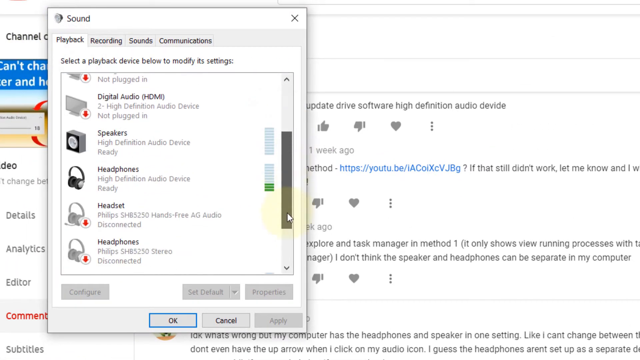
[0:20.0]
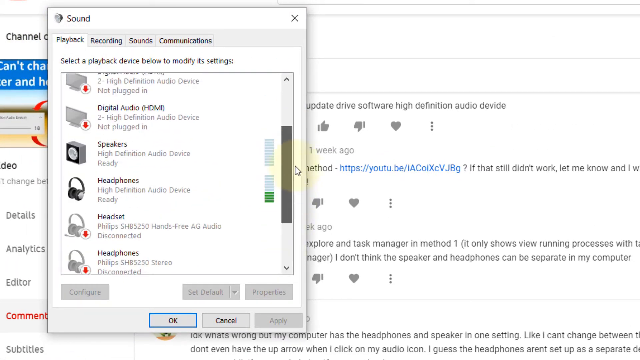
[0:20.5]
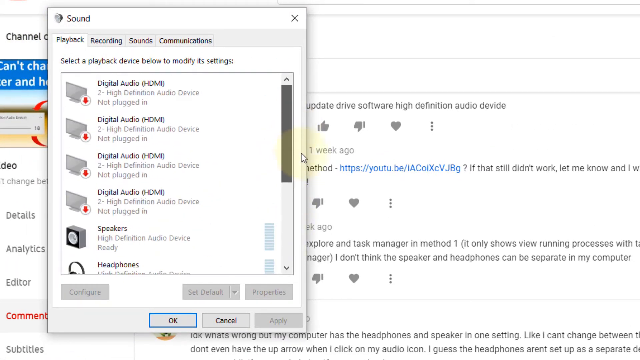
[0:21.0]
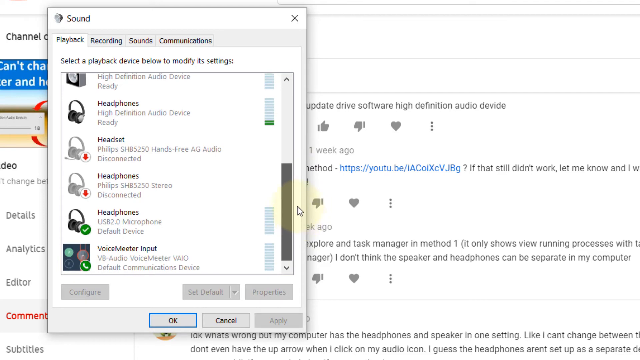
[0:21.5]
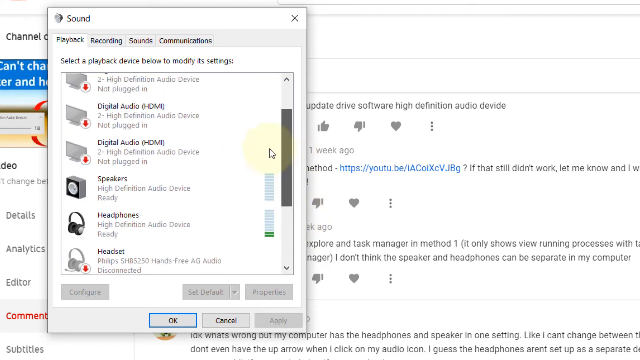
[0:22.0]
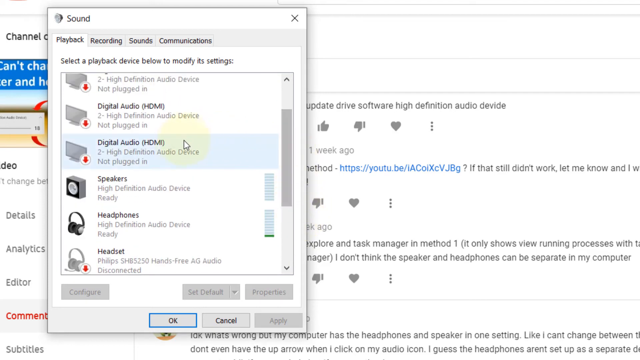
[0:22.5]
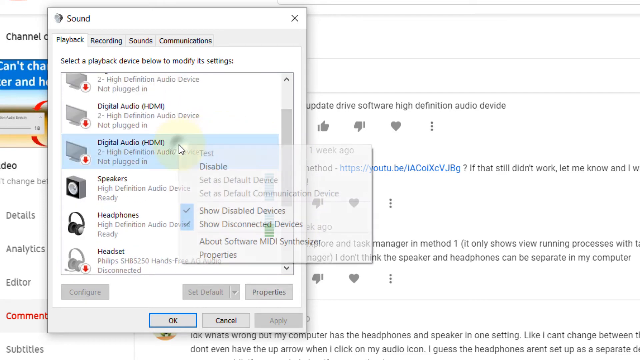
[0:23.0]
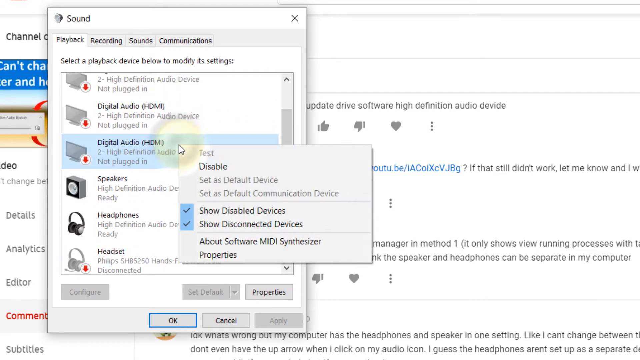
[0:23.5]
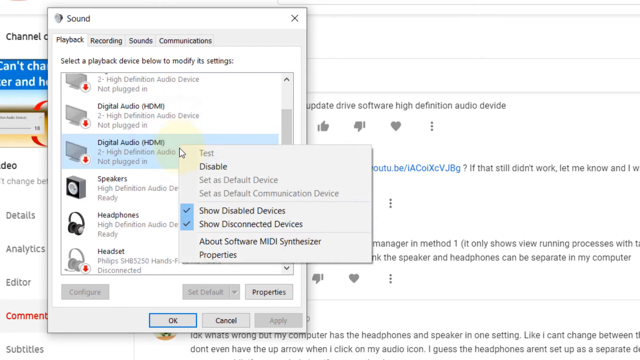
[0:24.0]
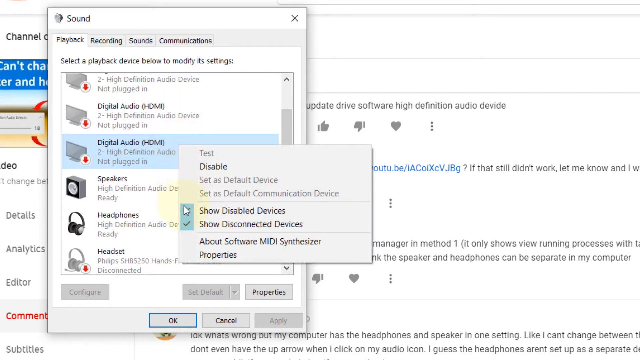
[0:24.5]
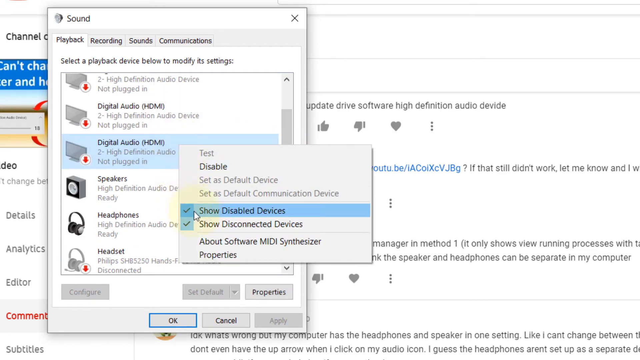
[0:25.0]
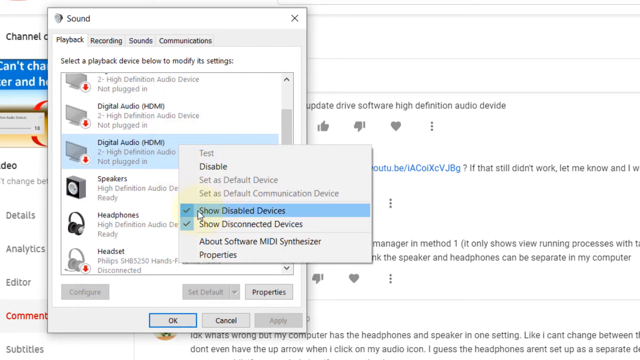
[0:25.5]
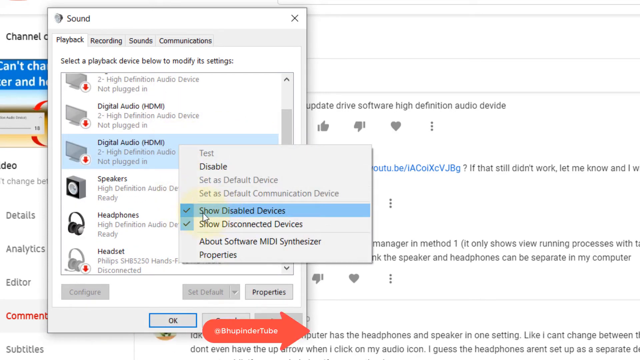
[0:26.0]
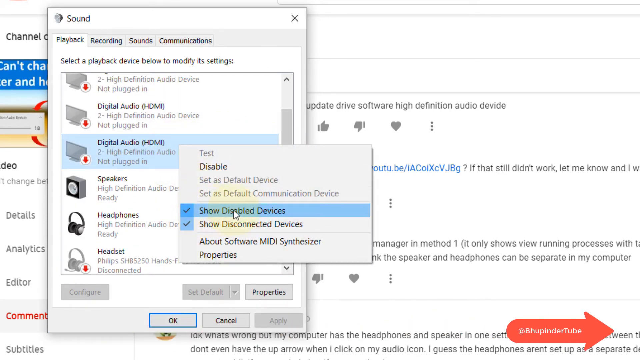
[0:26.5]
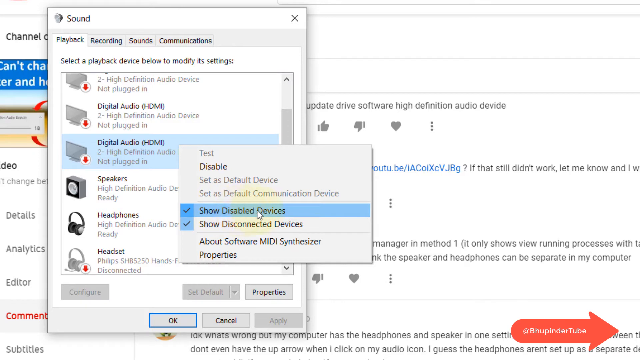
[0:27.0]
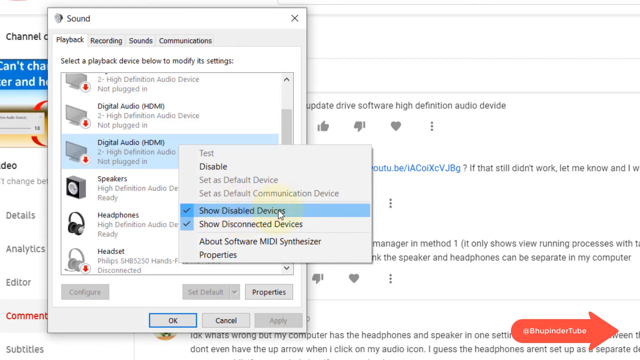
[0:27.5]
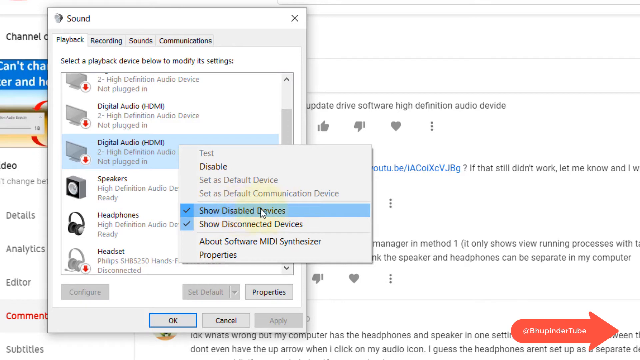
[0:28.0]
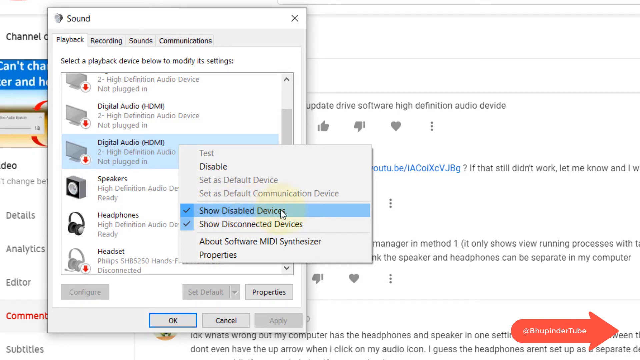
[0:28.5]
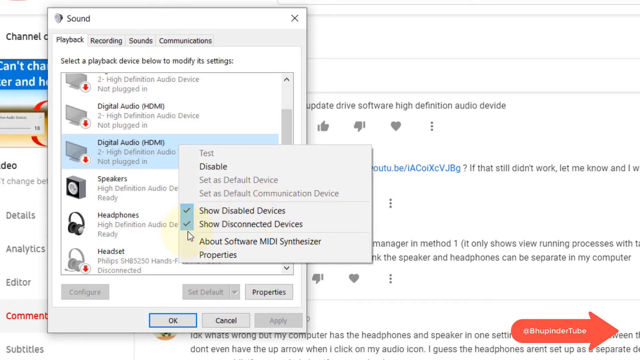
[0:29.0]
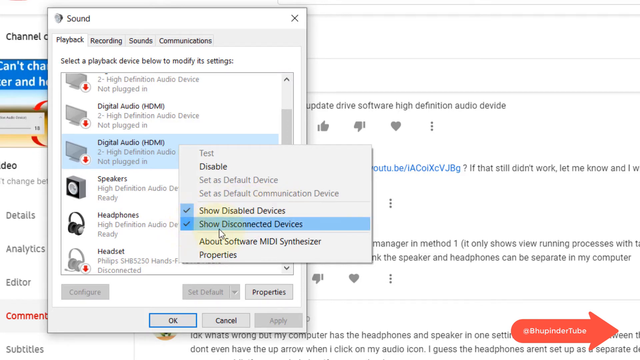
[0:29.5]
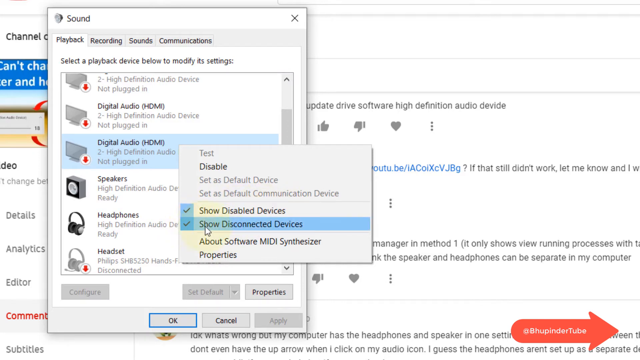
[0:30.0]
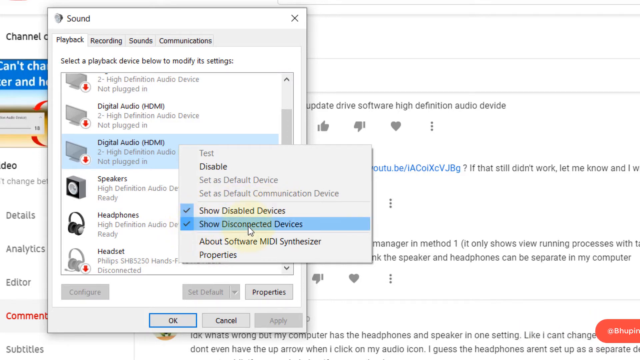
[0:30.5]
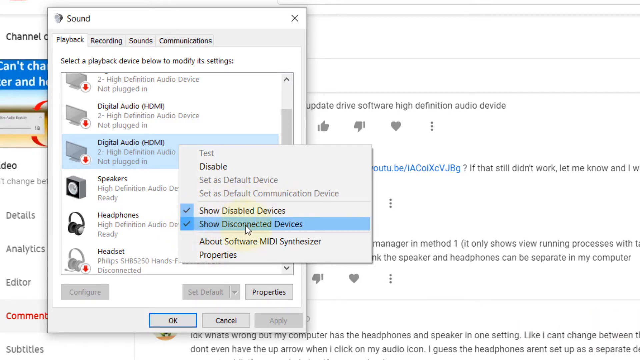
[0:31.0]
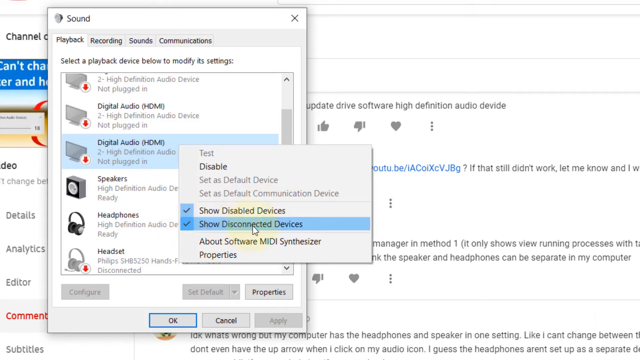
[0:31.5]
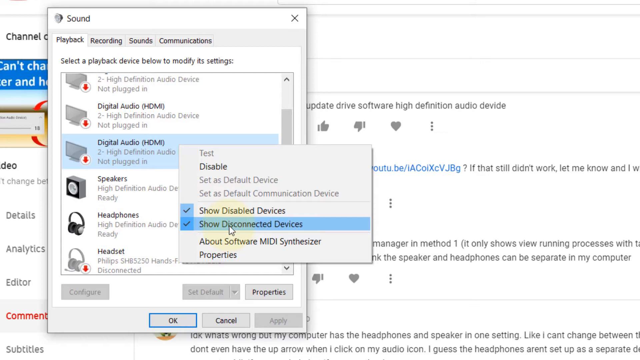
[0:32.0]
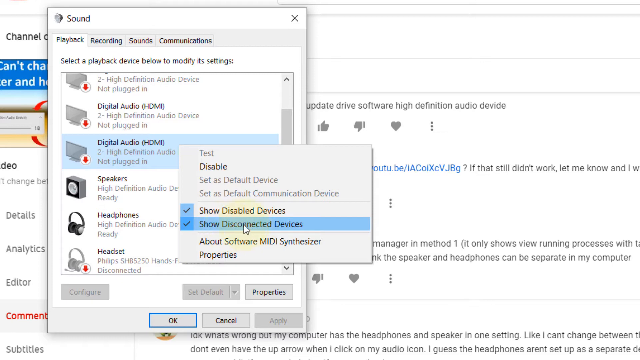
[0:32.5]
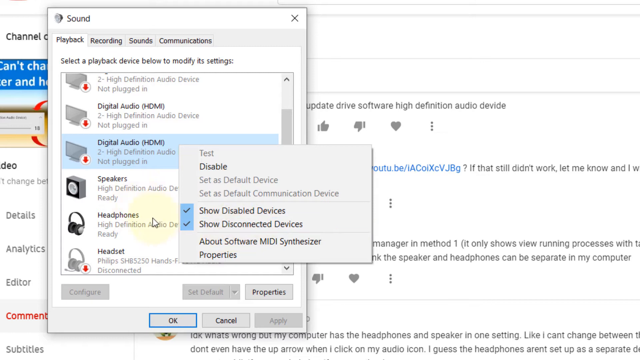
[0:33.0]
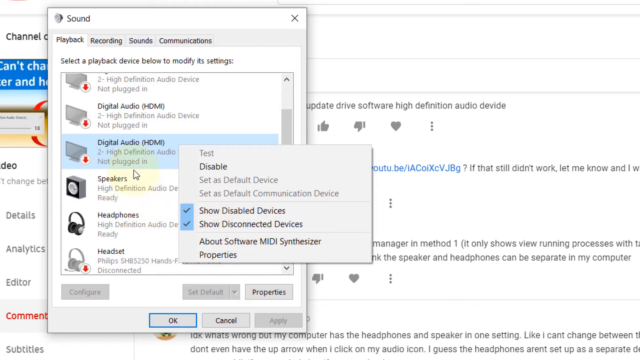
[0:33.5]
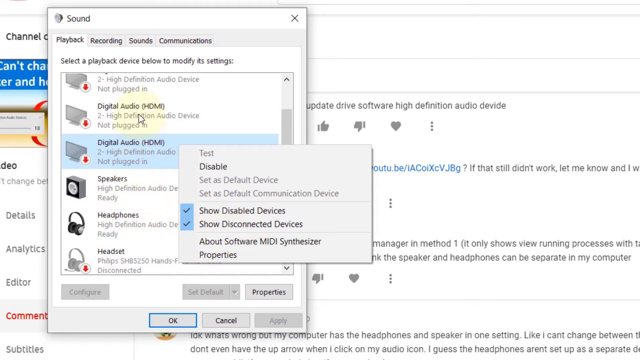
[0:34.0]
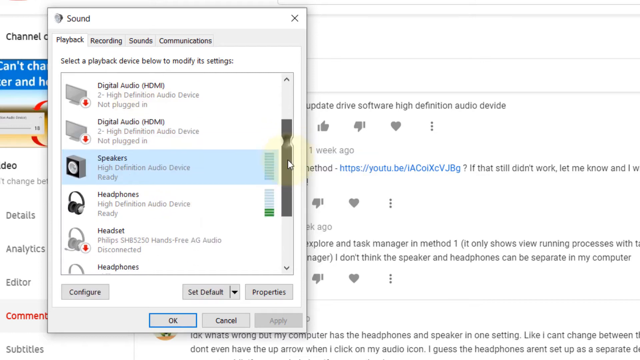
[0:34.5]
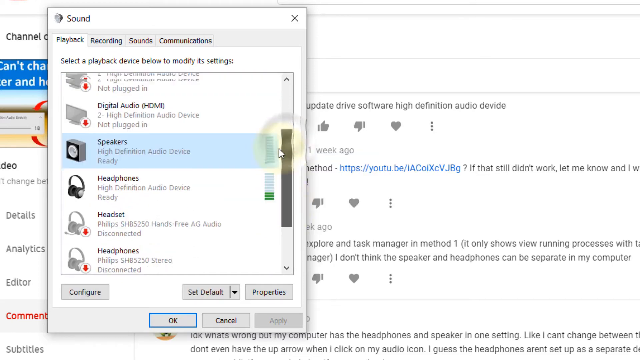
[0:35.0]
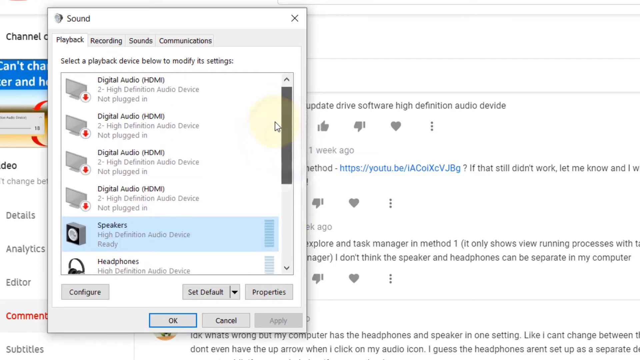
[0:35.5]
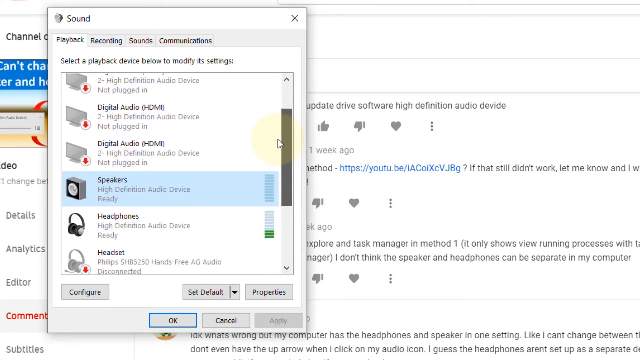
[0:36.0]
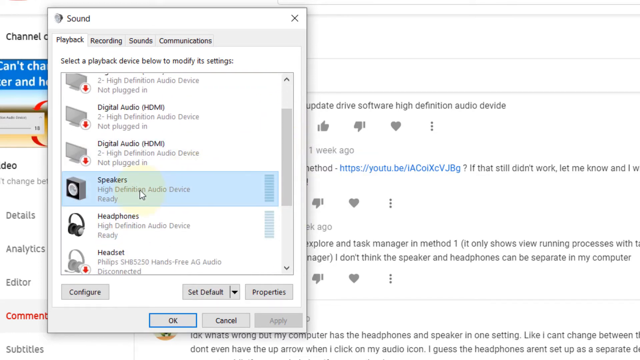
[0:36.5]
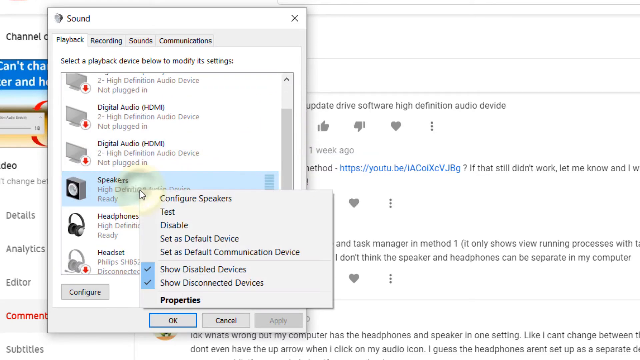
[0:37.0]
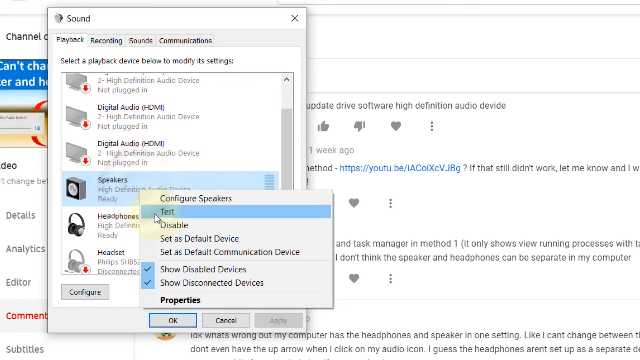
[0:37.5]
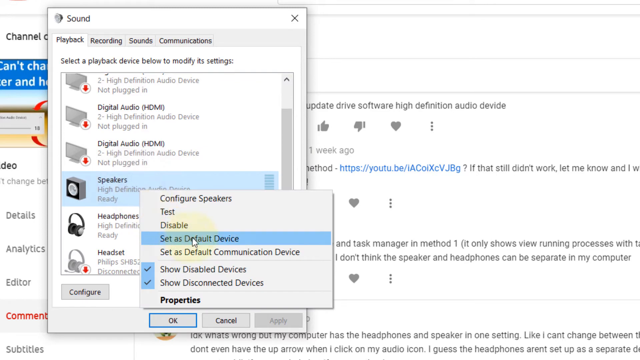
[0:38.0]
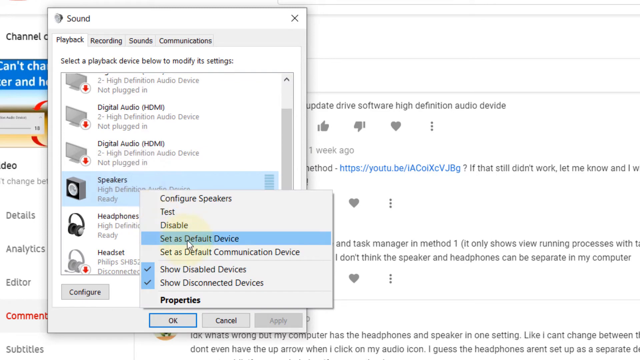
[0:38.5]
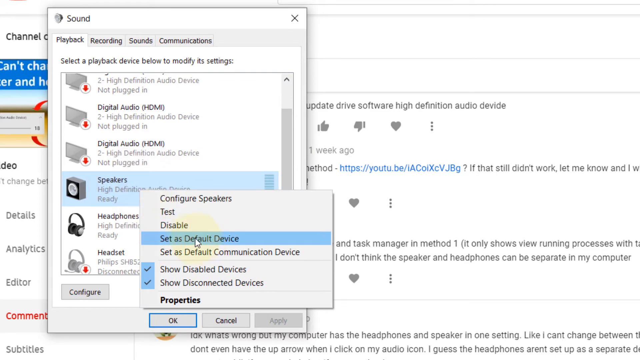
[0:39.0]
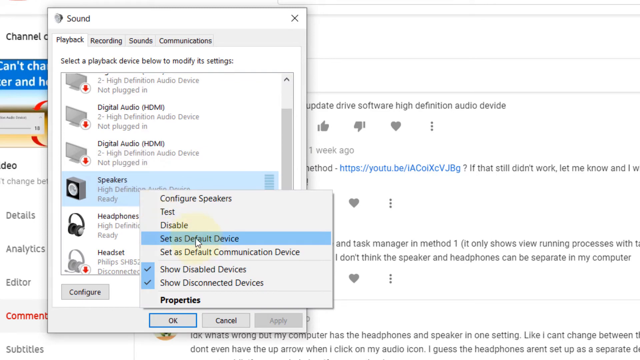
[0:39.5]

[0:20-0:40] In the Sound window, a line of tabs is shown: Playback, Recording, Sounds and Communication. An arrow clicks on Playback, which shows a list of options. The arrow moves down and presses on digital audio, and a short menu of options appears on its right-hand side, including disable, show disabled devices and show disconnected devices. The arrow moves back and forth over these options and clicks on show disconnected devices. It then continues to move up and down and clicks on speakers, bringing up a short menu with "set default devices". After that, the arrow moves on and presses digital audio, showing its options as well. A red arrow then appears in the bottom right corner, pointing outward. After that, the Speakers option is chosen.